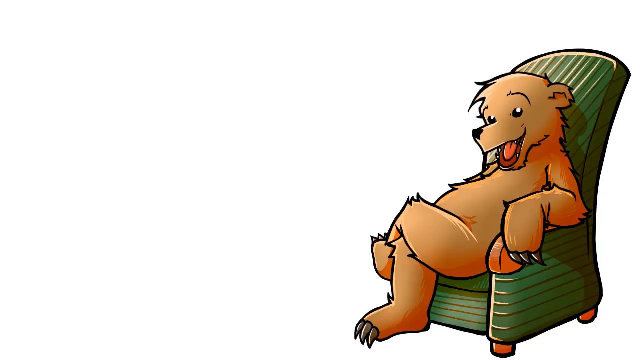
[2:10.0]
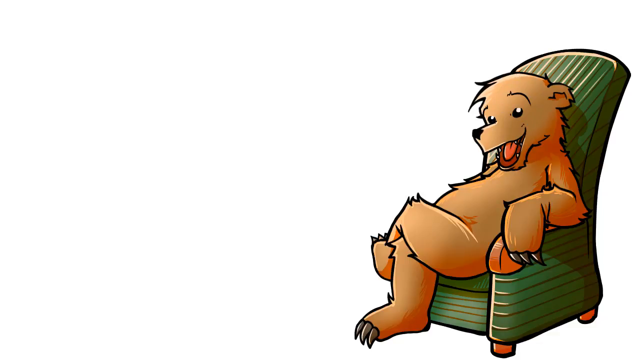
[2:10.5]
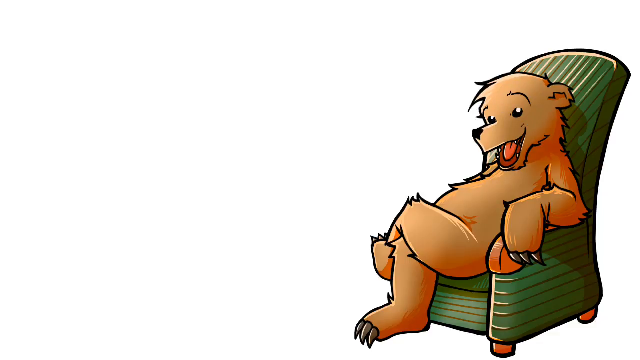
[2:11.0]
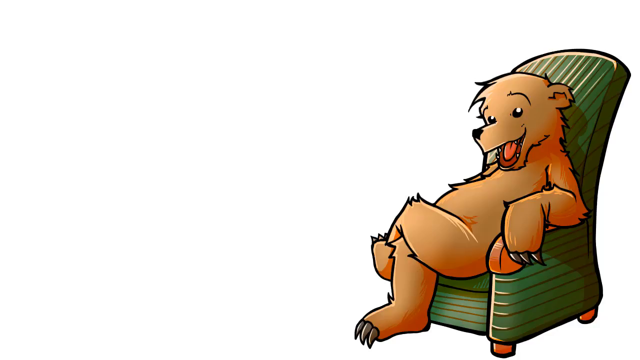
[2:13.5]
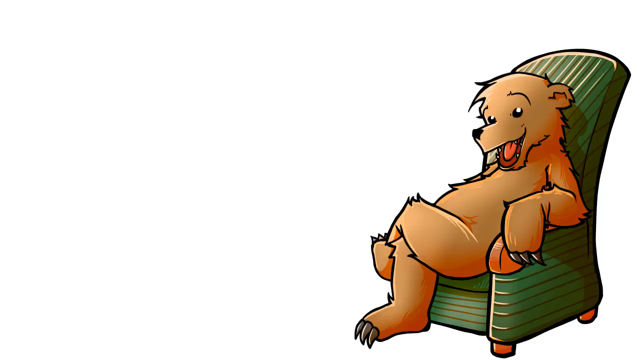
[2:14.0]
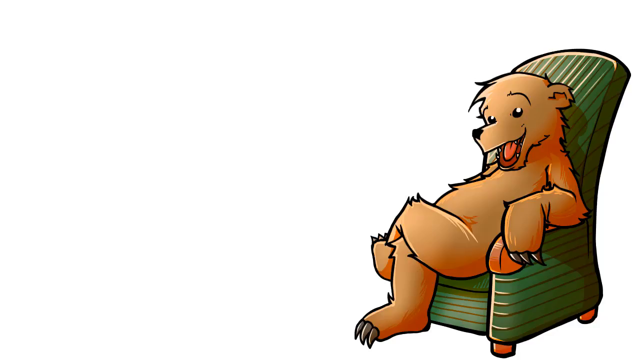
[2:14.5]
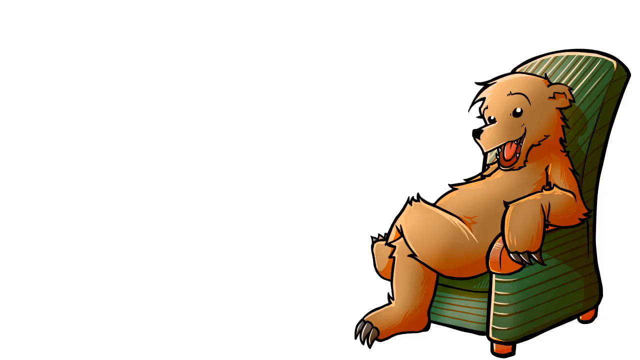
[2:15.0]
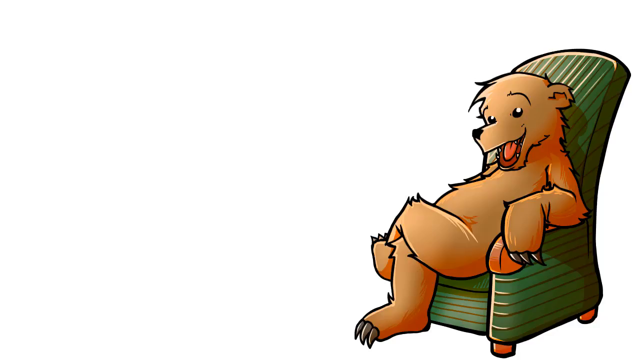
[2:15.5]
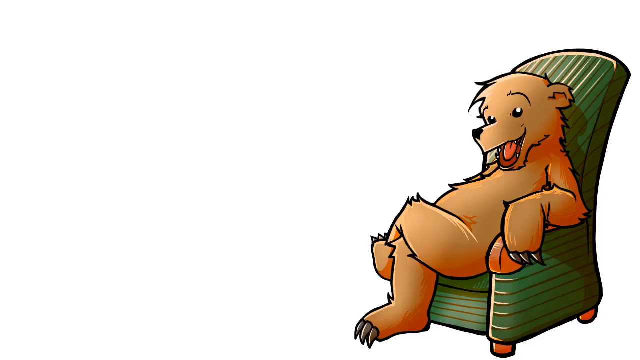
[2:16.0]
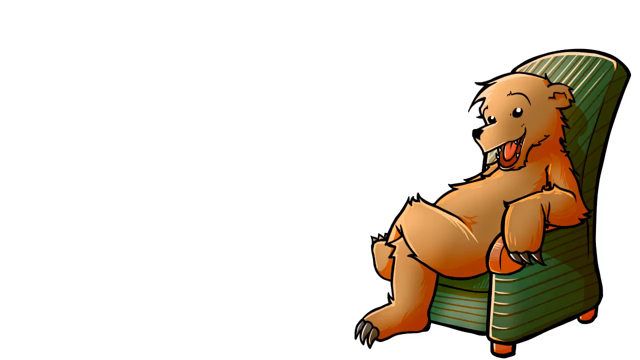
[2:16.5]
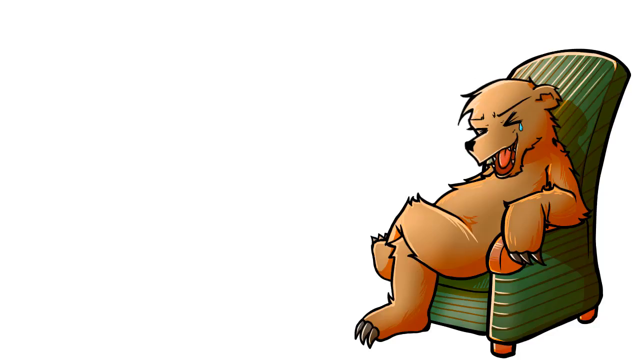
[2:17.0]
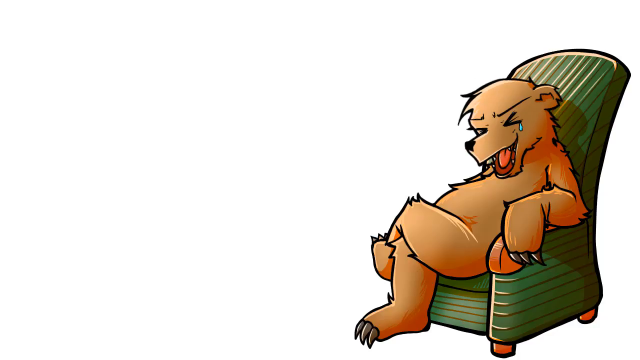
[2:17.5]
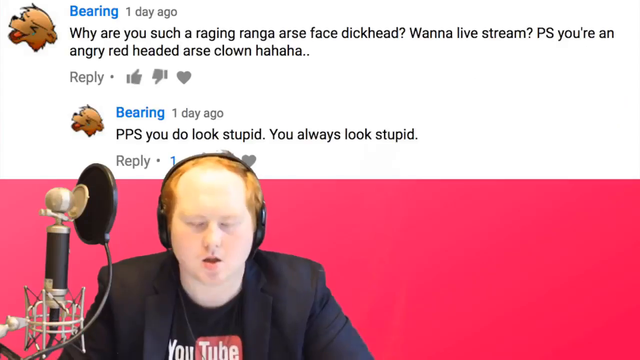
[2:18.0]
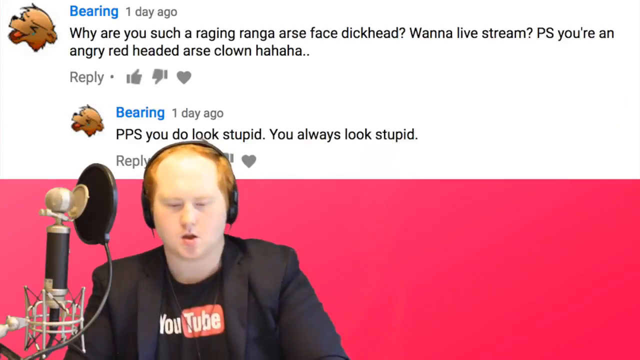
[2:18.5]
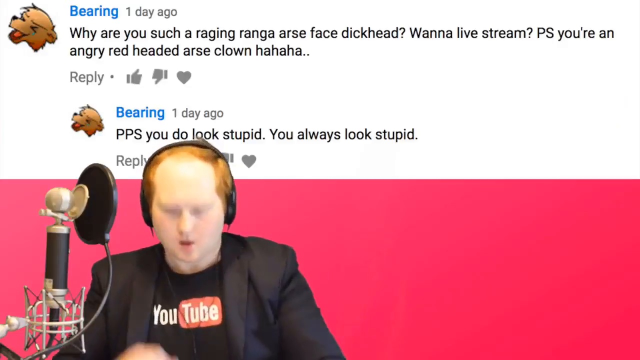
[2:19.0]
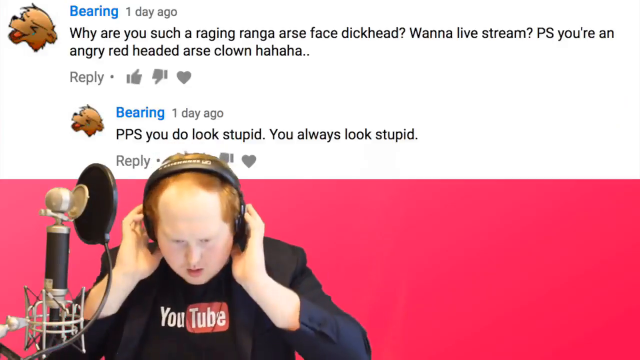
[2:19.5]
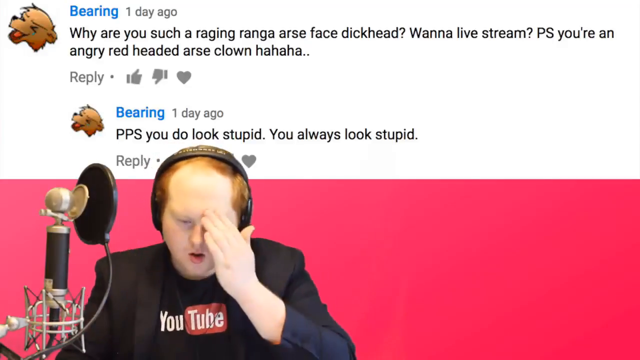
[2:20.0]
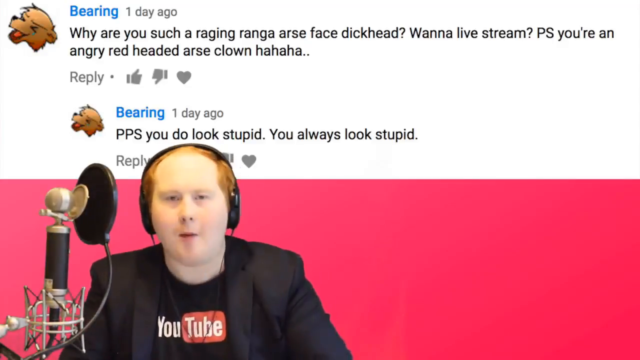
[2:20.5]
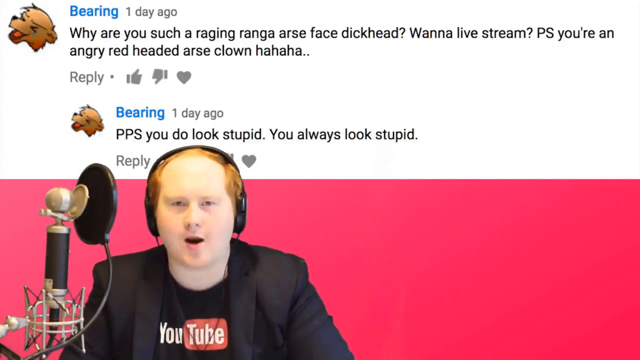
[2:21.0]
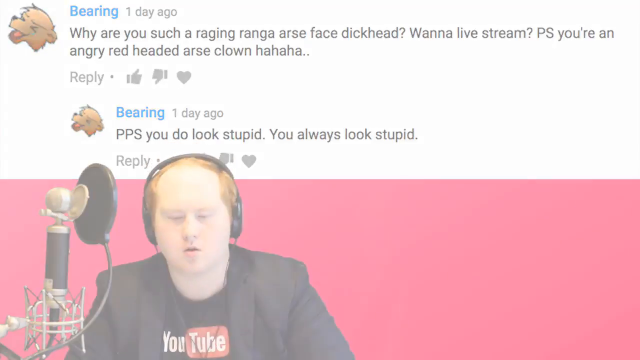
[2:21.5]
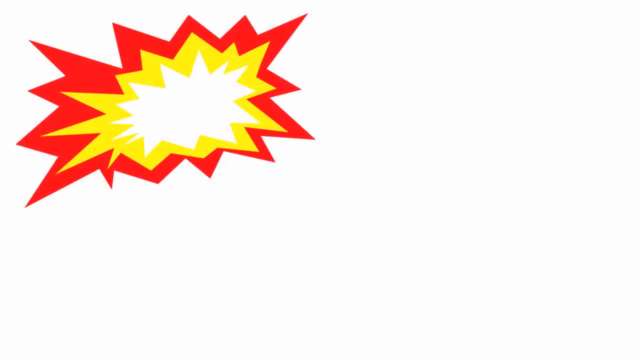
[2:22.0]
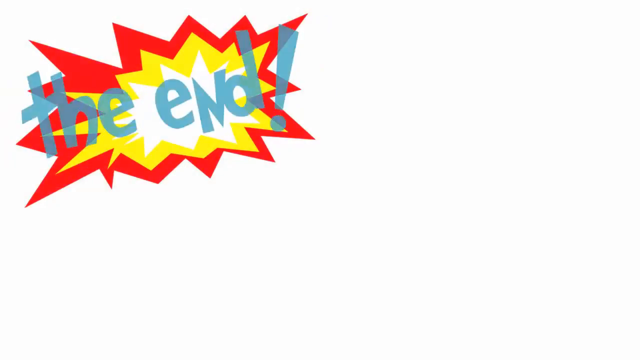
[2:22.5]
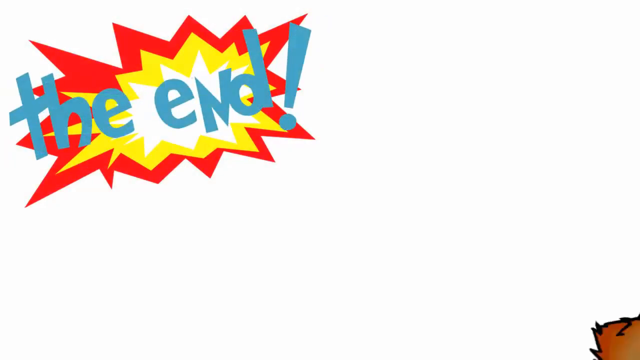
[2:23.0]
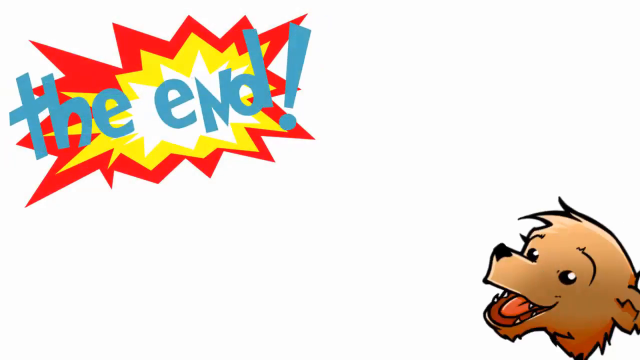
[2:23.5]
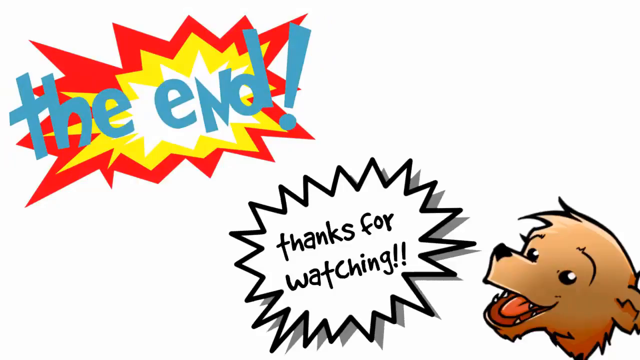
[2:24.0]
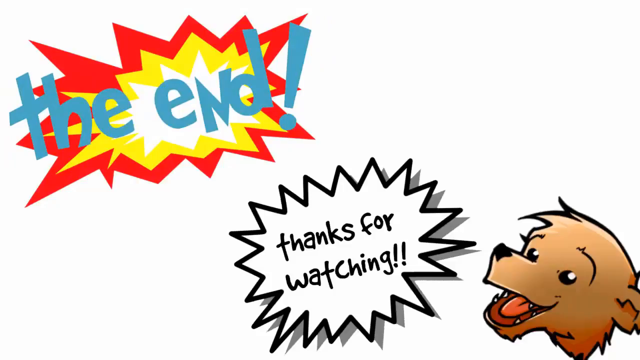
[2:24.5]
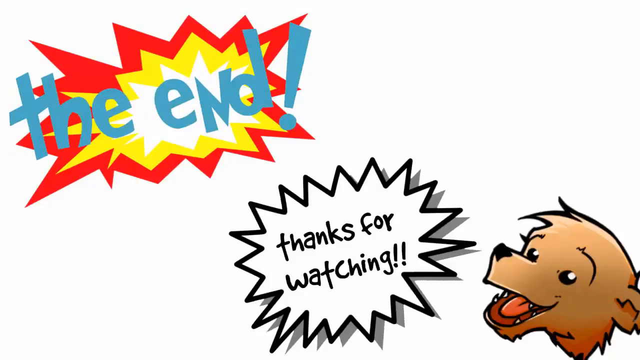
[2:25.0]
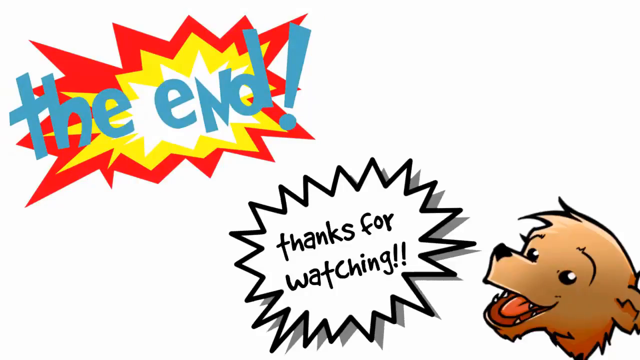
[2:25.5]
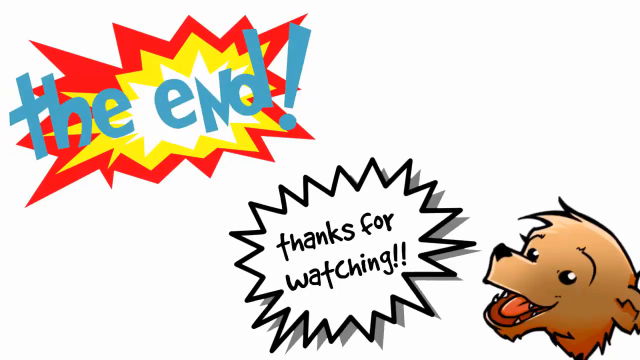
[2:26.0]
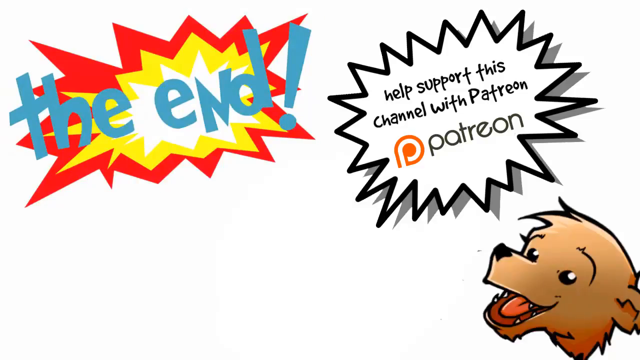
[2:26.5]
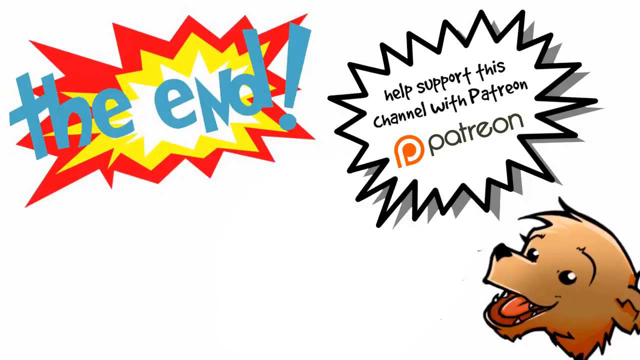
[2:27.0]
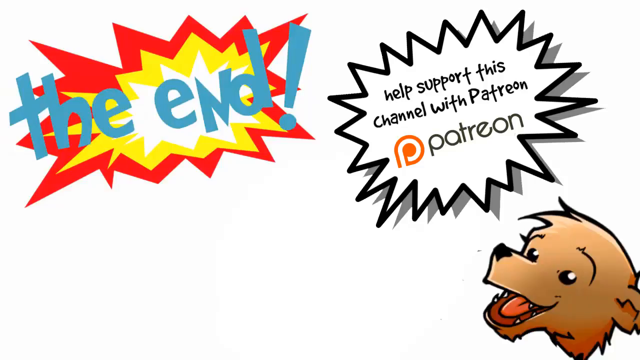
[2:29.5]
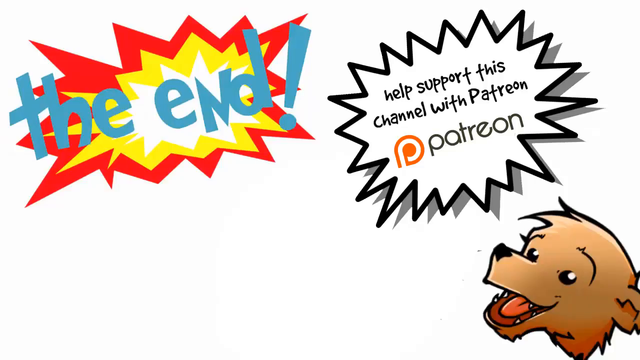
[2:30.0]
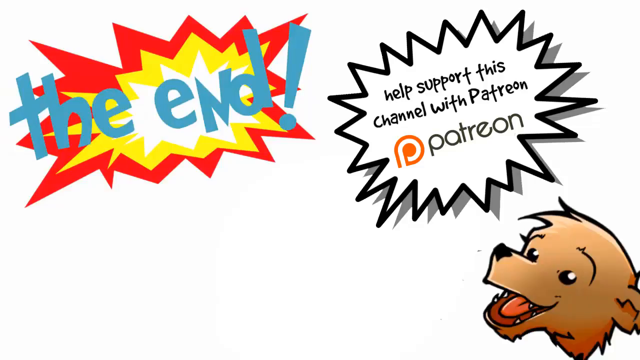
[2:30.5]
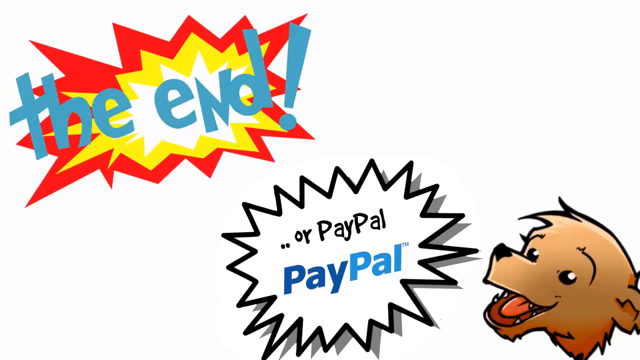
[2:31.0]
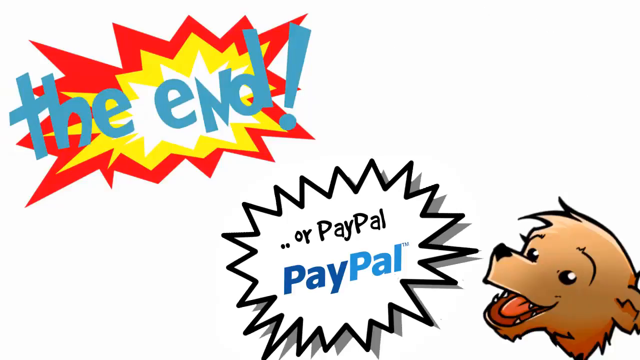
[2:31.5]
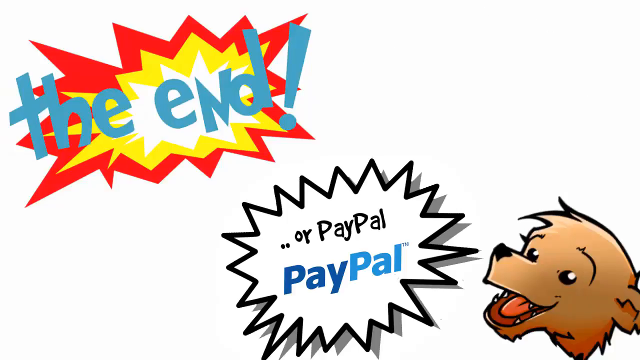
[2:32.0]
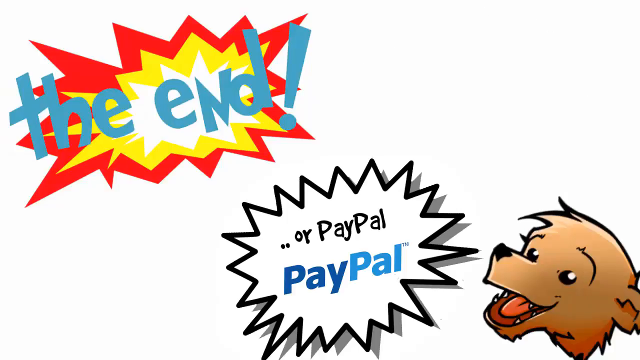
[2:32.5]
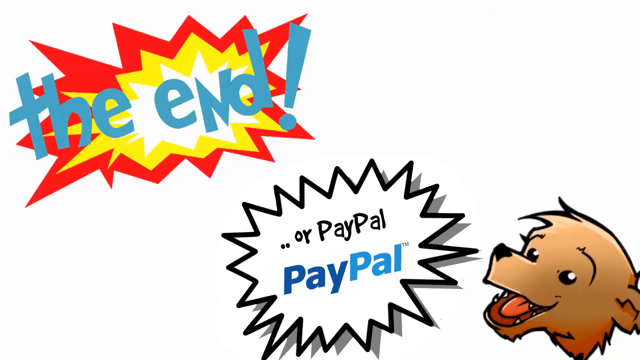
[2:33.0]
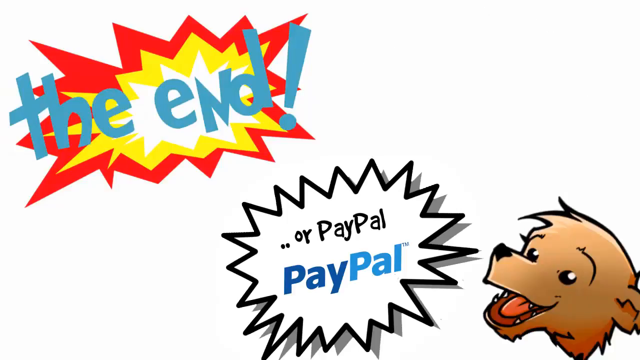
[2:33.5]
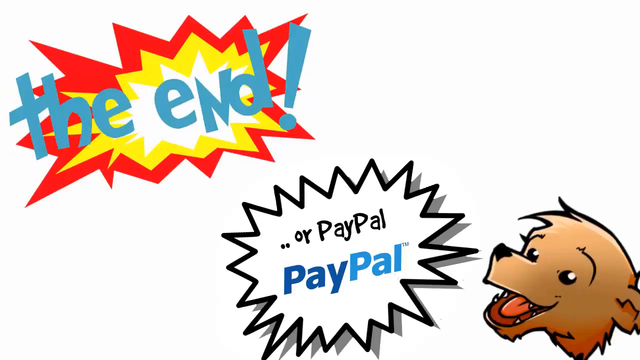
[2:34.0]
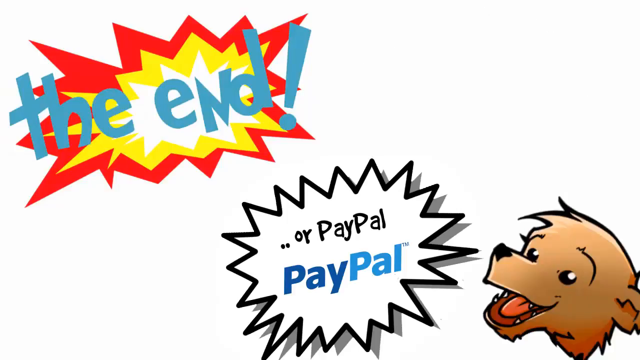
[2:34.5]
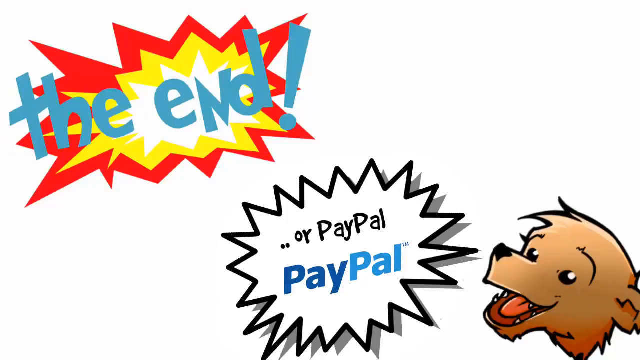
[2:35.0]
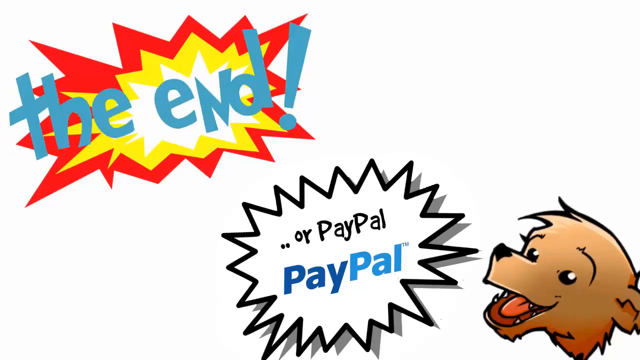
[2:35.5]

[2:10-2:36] A couple of transitioning images show the cartoon bear sitting in the recliner: at one point it smiles with a laugh as it sits contently, then it appears with its eyes closed, laughing, with teardrops from laughter showing. The video returns to the podcaster, who at times adjusts the earphones on his head with his hands as he speaks. At one point he wipes his brow with his left hand, apparently having worked up a sweat. The screen then turns white, and an exploding red, yellow and white text balloon appears in one corner with "the end!" superimposed in gray letters. Along the bottom of the screen, another balloon-type text box with jagged, pointed edges reads "thanks for watching!" in black text, with a small image of the bear, as if the bear is saying it, its mouth open, smiling, eyebrows raised. Another pop-up balloon appears in the corner reading "Help support this channel with Patreon", with the Patreon name and logo below. Another pop-up then appears toward the bottom reading "Or PayPal", followed by the PayPal name and logo.